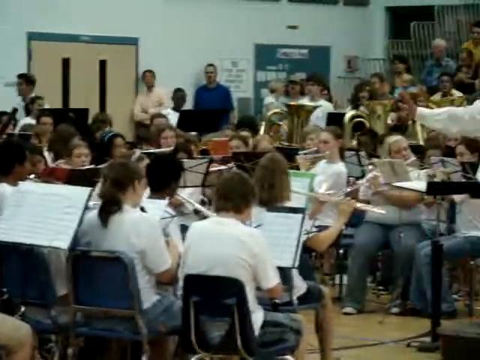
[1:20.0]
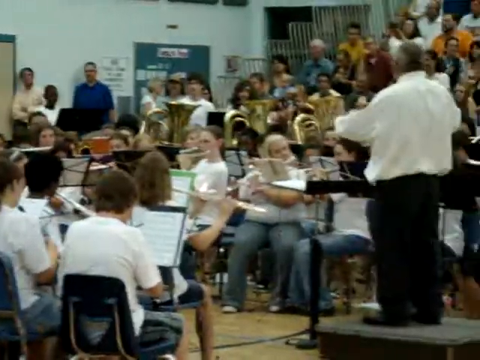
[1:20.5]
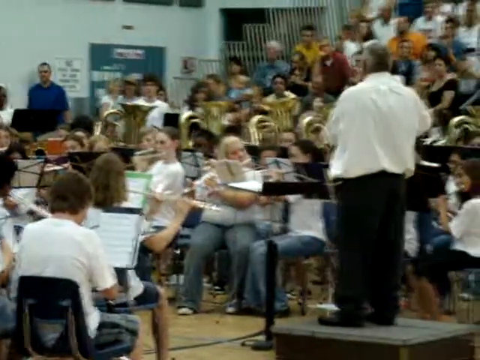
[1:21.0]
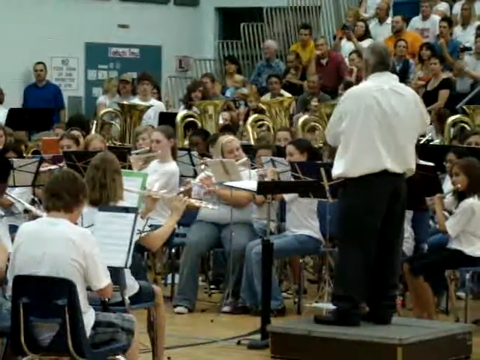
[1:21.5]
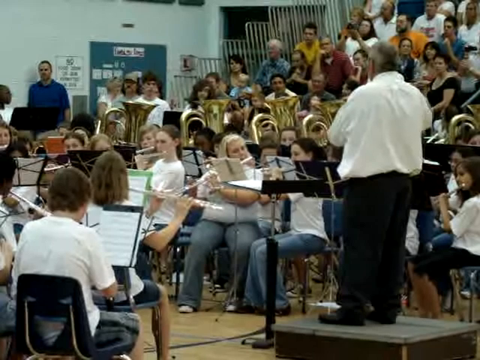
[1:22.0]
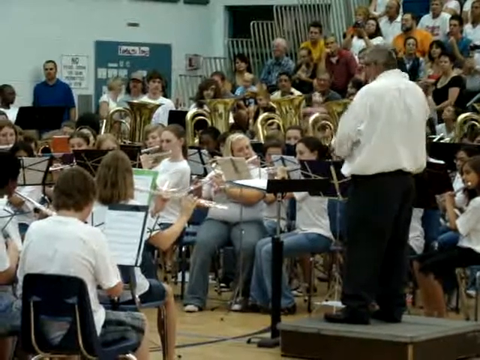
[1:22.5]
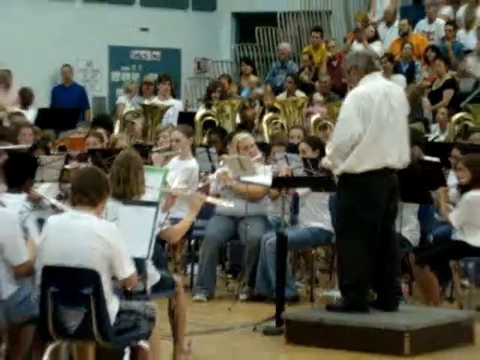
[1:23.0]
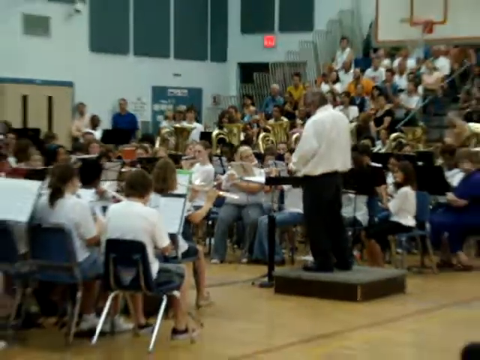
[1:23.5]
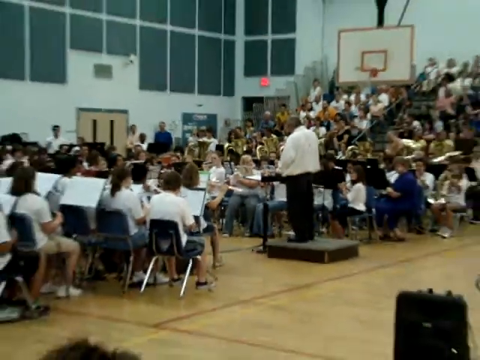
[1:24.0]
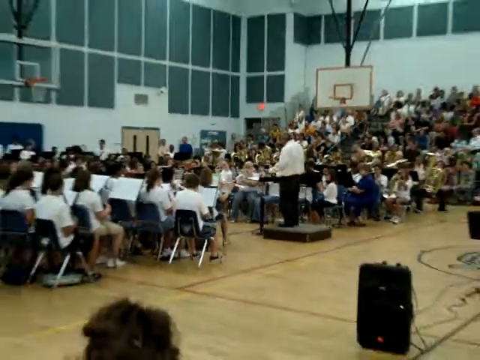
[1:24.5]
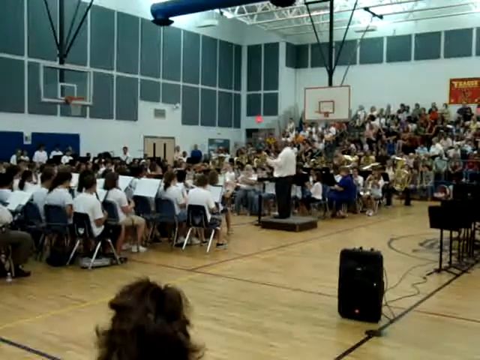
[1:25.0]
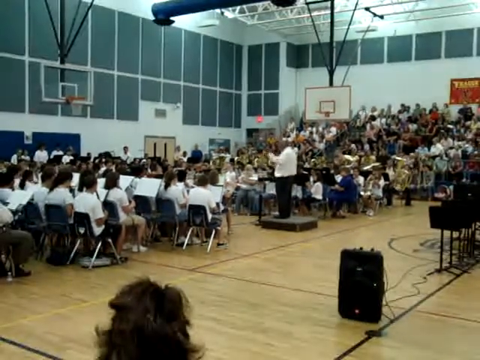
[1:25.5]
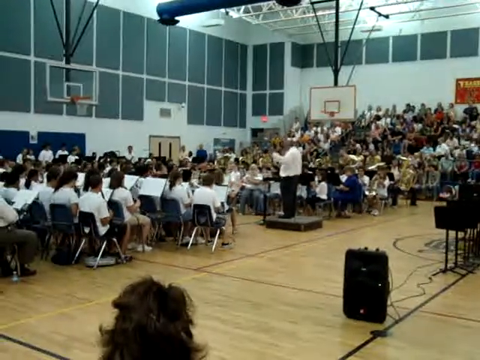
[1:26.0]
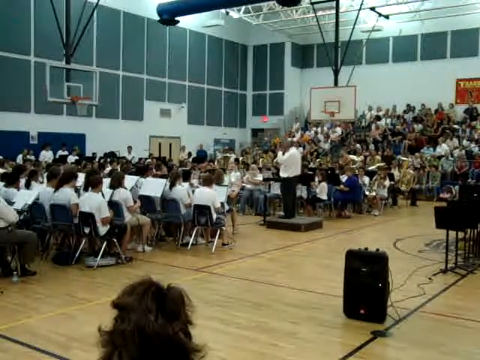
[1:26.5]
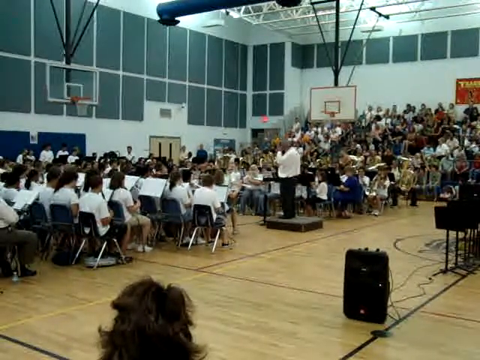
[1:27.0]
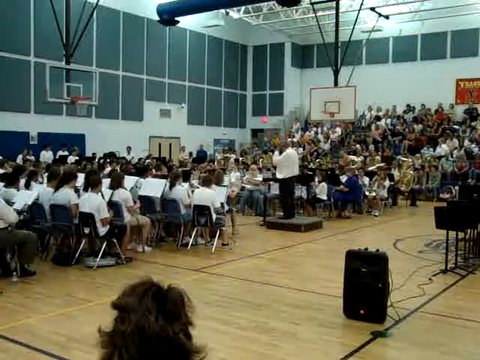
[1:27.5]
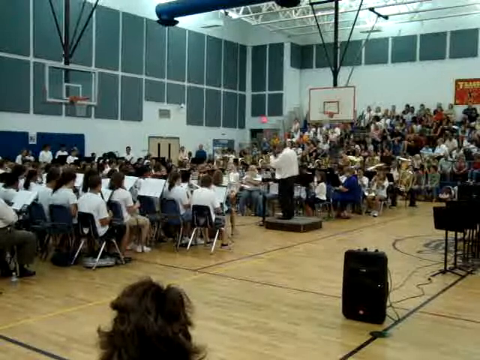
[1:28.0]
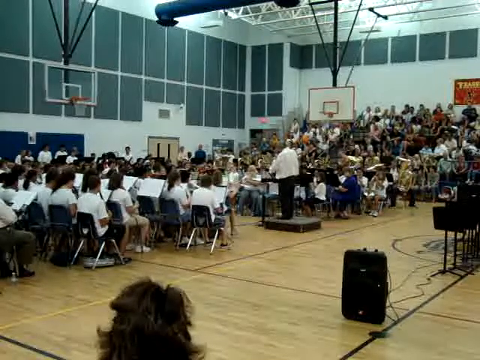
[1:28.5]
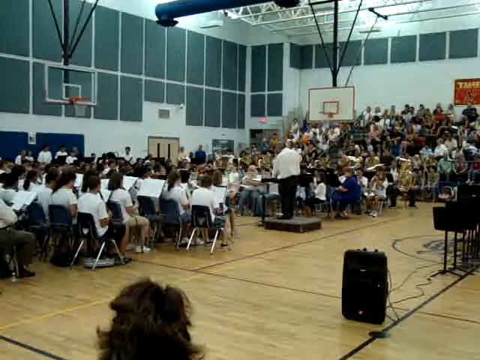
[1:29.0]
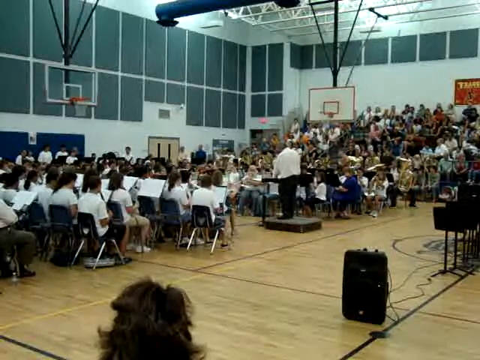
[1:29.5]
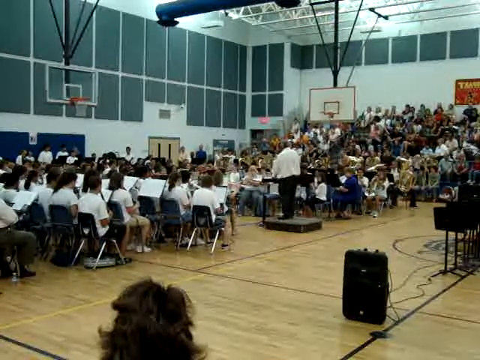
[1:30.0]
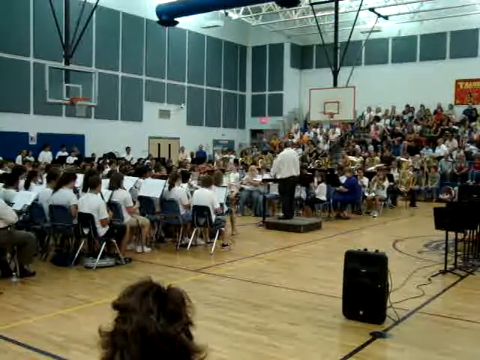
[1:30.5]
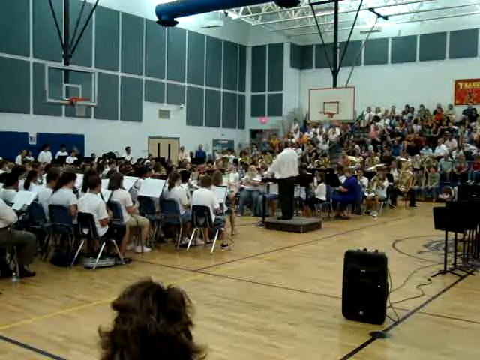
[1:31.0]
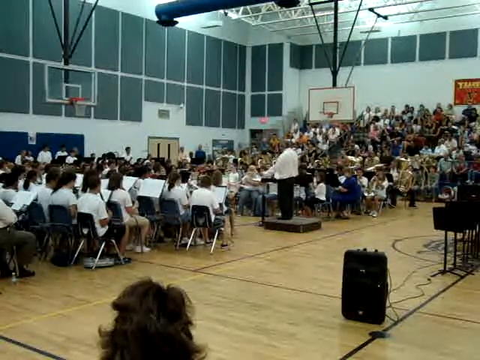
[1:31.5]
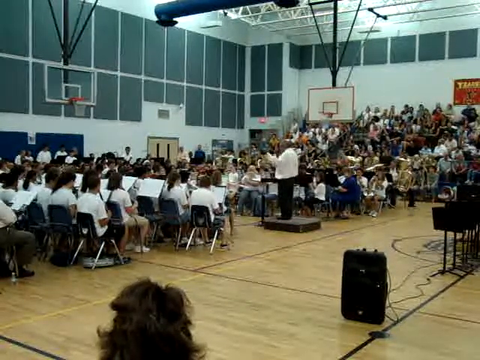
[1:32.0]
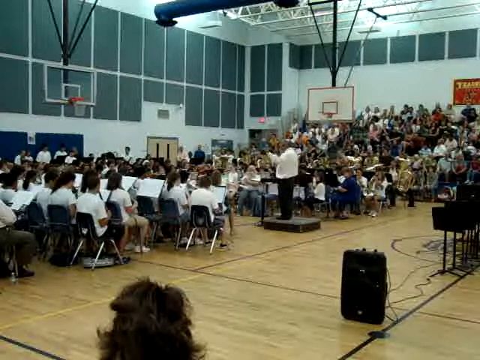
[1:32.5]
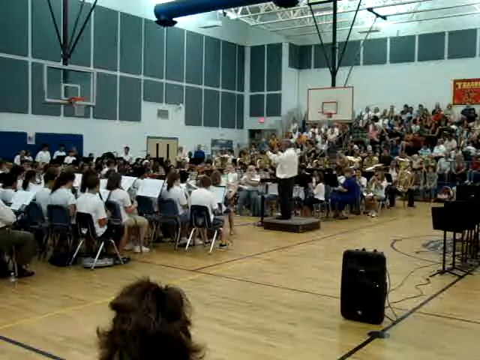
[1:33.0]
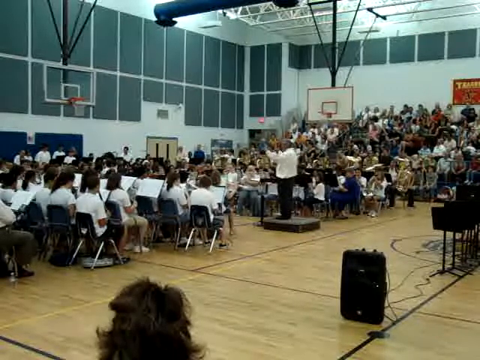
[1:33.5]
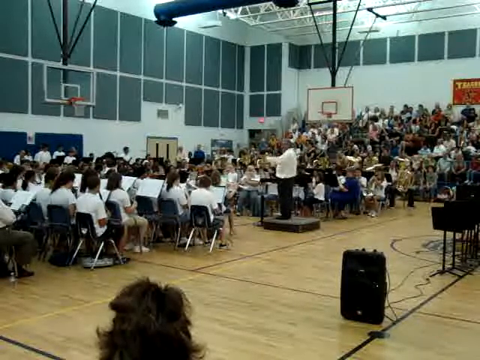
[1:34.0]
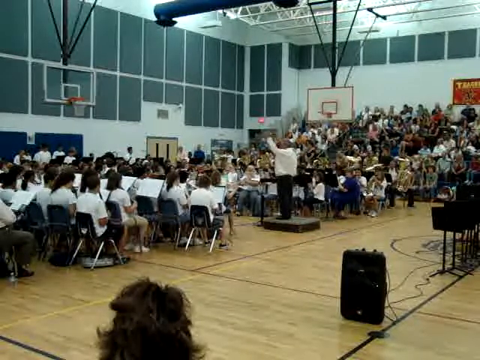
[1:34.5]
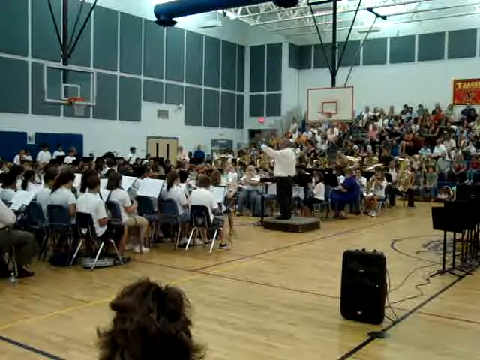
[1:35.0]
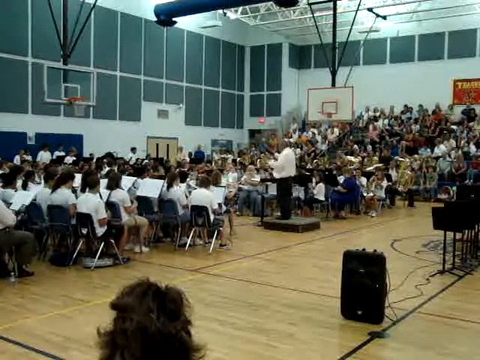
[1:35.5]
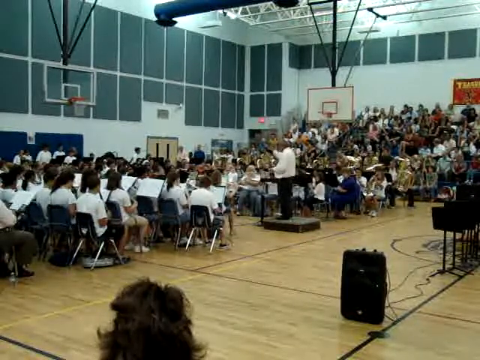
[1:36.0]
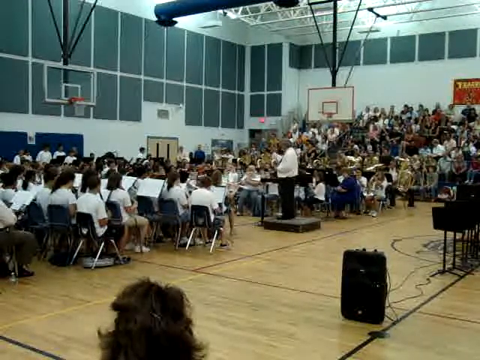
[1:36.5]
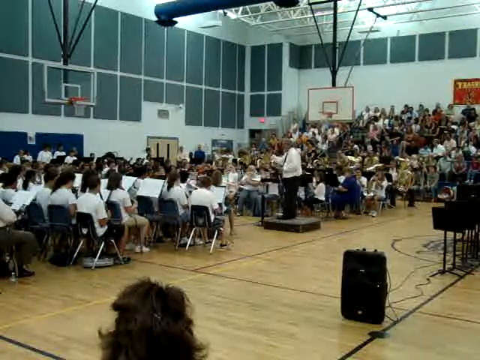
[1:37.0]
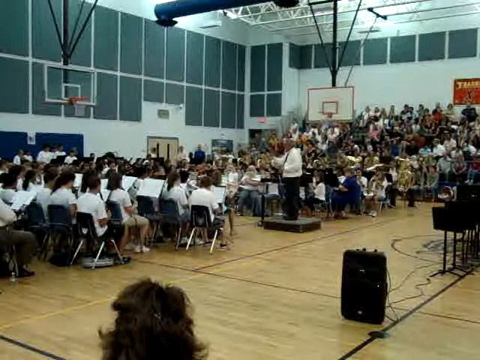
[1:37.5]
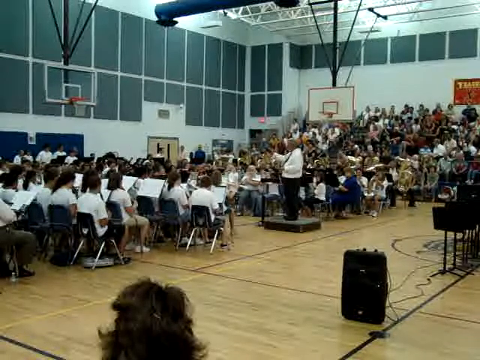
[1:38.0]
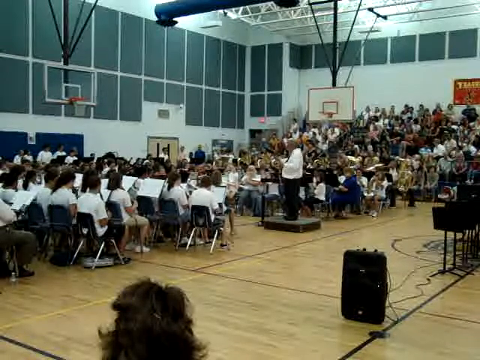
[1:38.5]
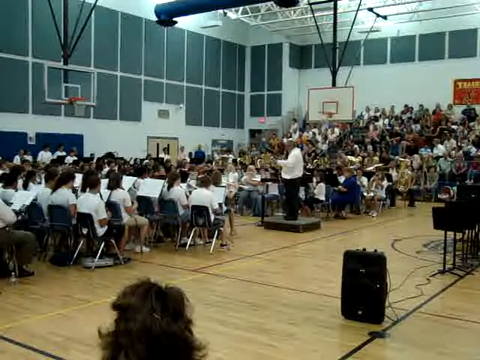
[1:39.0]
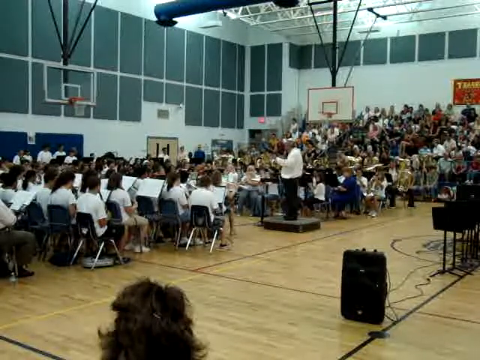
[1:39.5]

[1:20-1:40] A close-up view shows a bunch of children sitting on blue chairs, looking at sheet music and holding instruments; all of them look like they might have a flute or something similar. In the background, a bunch of teachers and other people who work for the school are next to a brown door, and some people sitting kind of in a stadium are watching the kids perform. The camera moves over towards the composer, who wears a white long-sleeve shirt and black-blue pants. The kids focus on him and on their music sheets, and the camera zooms out to show how many people are in the room. There are two basketball hoops, one on the right side that is white and red, and another that is clear and red. The man composing moves his arms, kind of guiding the children a bit. There is also a red sign in the background, and a woman's head is at the bottom of the video.